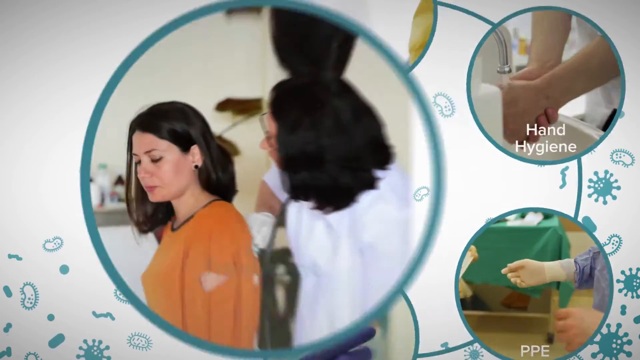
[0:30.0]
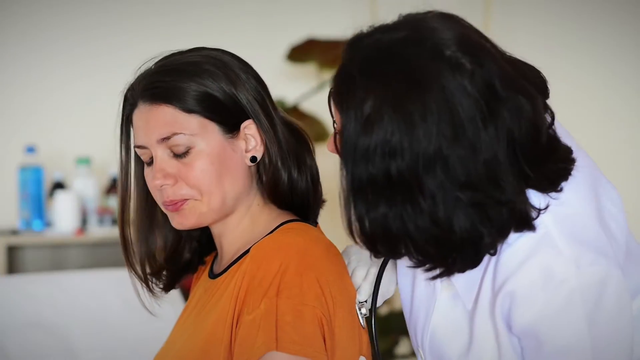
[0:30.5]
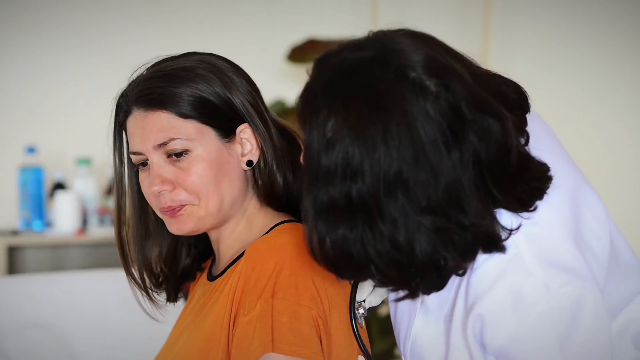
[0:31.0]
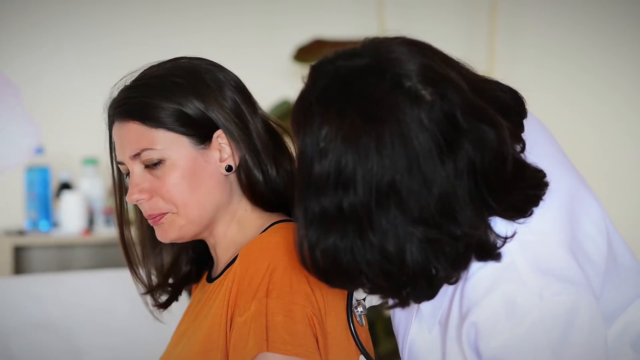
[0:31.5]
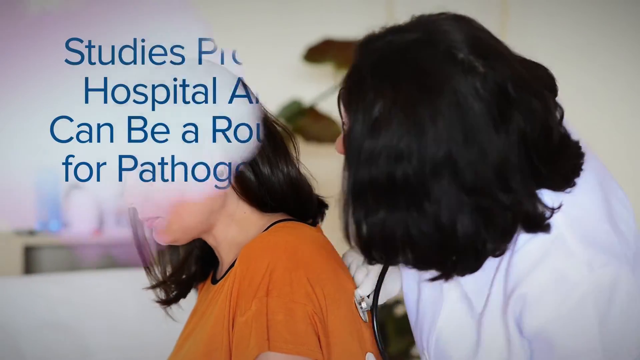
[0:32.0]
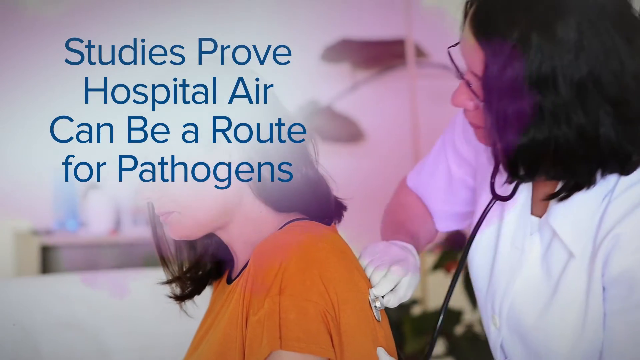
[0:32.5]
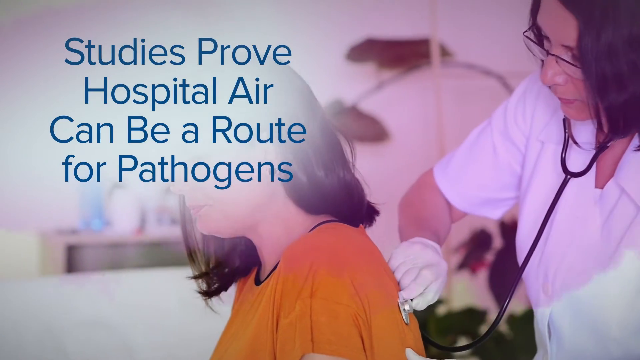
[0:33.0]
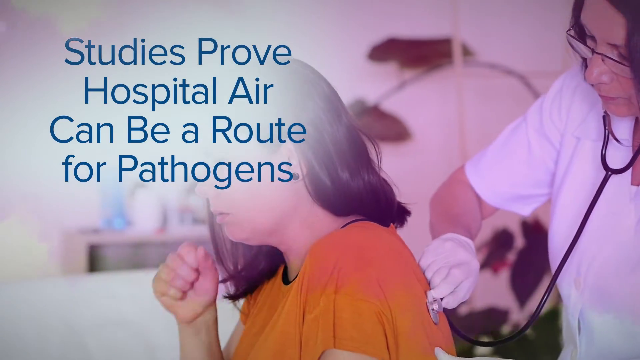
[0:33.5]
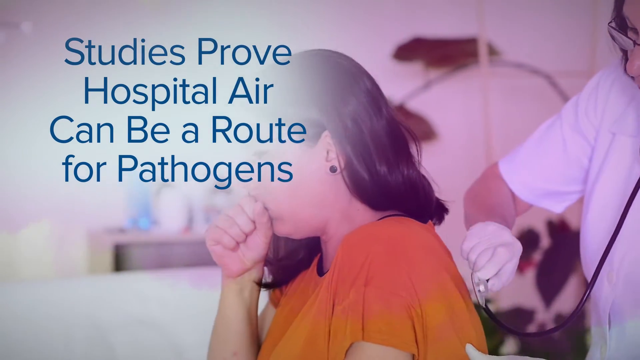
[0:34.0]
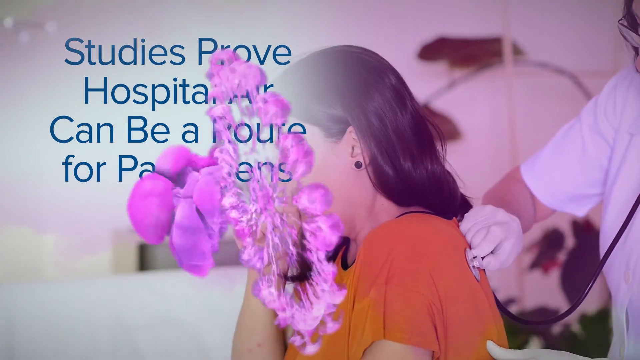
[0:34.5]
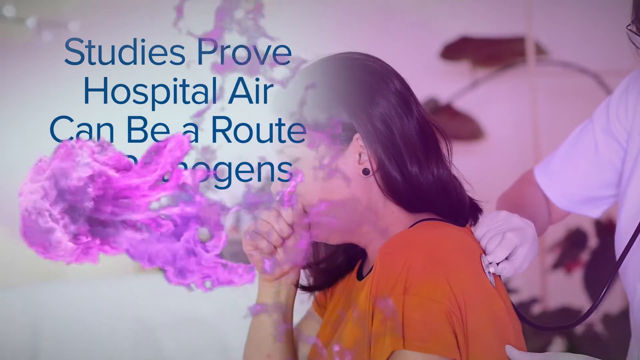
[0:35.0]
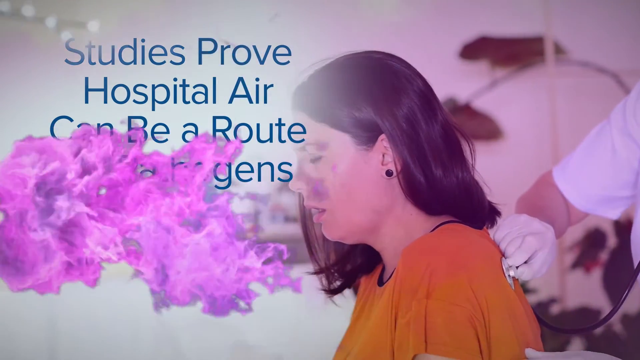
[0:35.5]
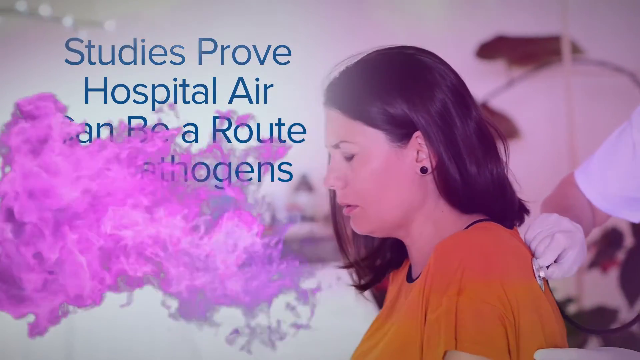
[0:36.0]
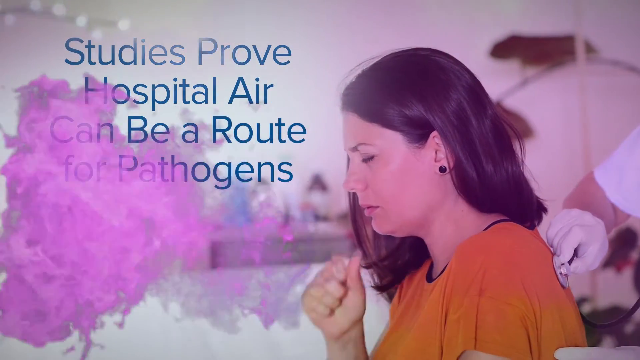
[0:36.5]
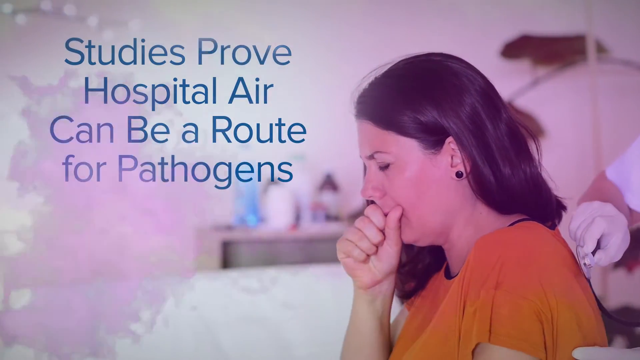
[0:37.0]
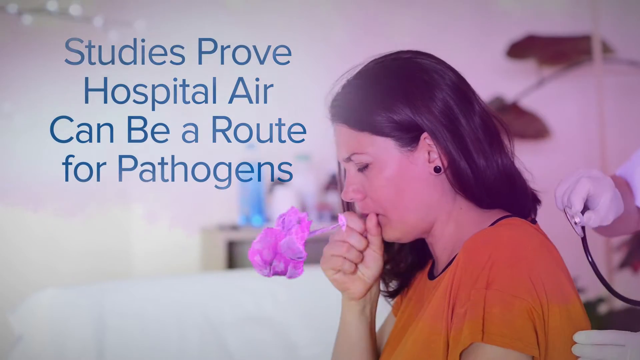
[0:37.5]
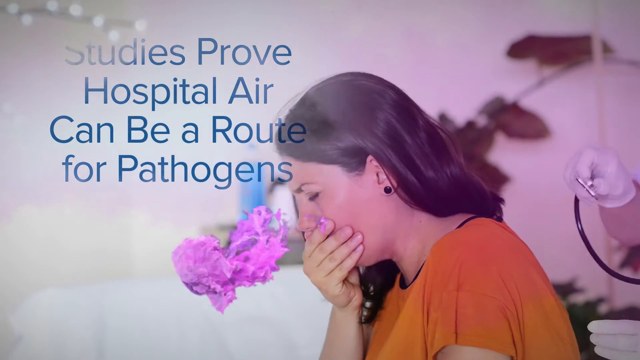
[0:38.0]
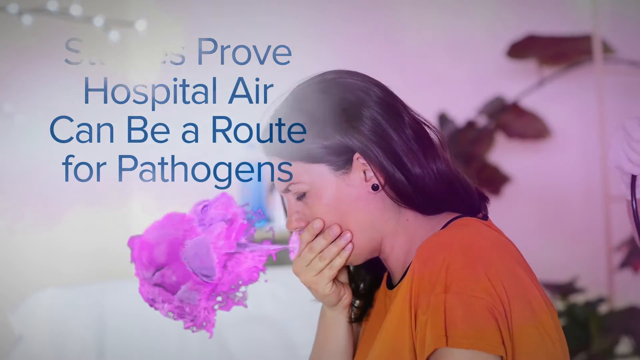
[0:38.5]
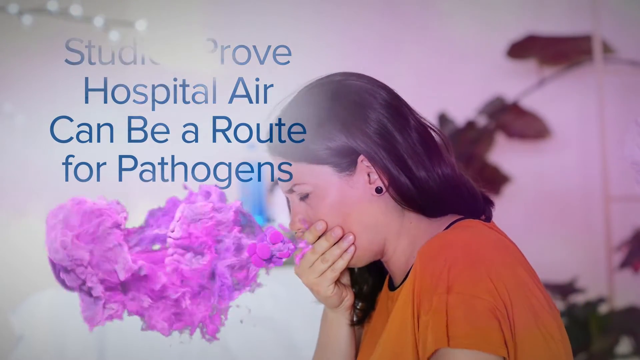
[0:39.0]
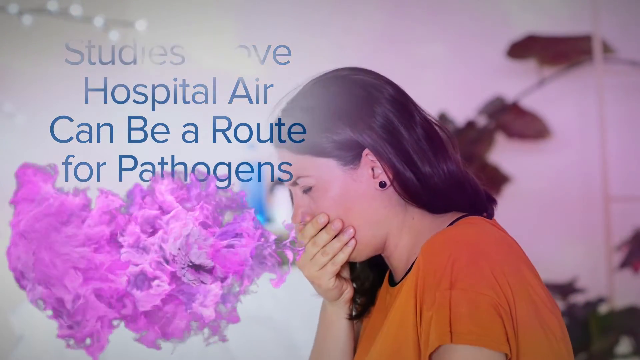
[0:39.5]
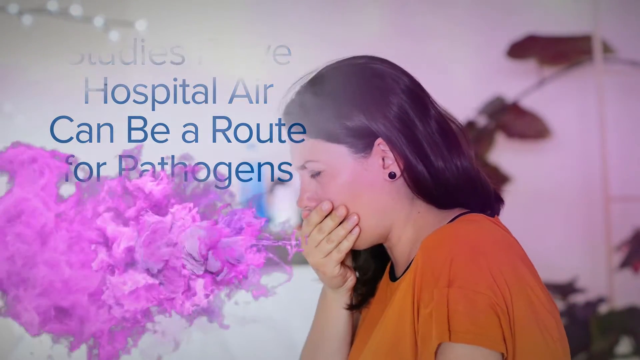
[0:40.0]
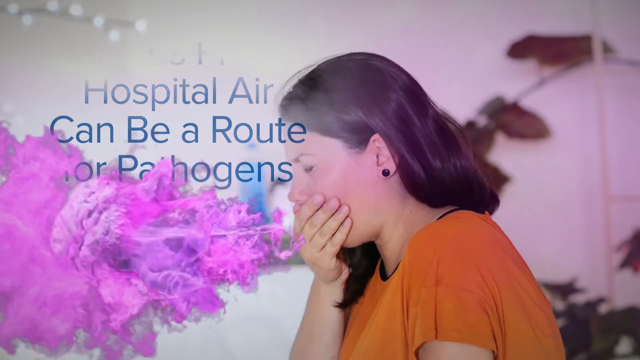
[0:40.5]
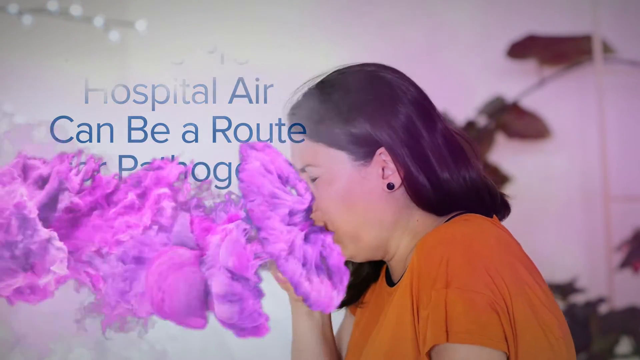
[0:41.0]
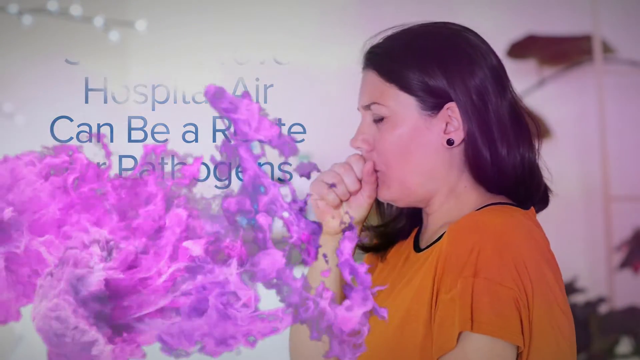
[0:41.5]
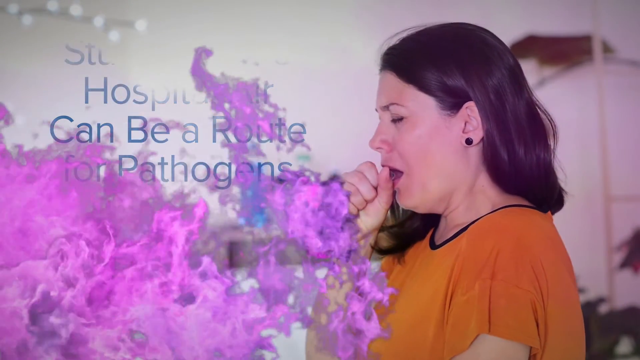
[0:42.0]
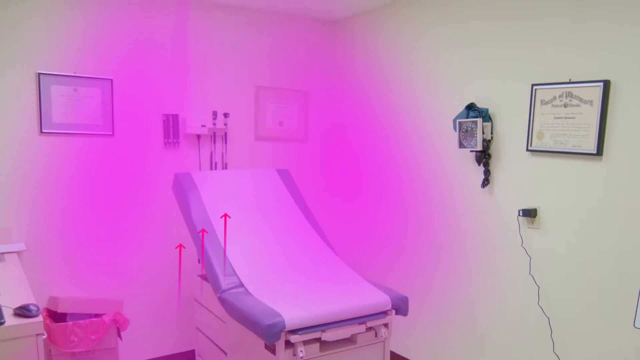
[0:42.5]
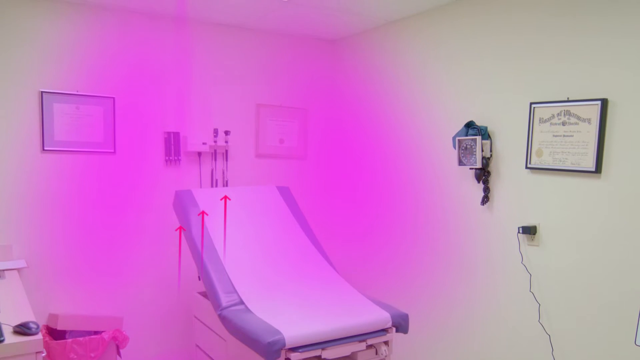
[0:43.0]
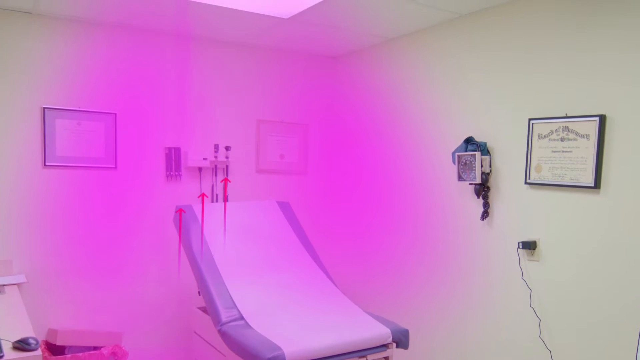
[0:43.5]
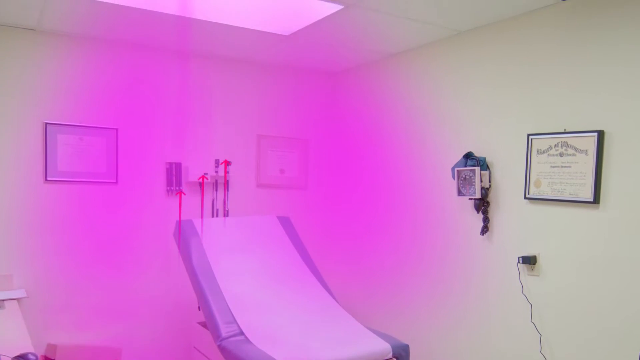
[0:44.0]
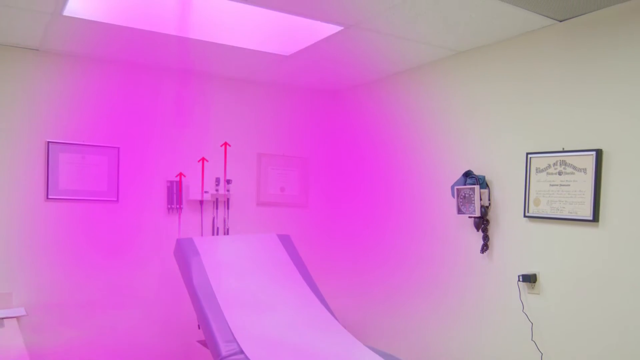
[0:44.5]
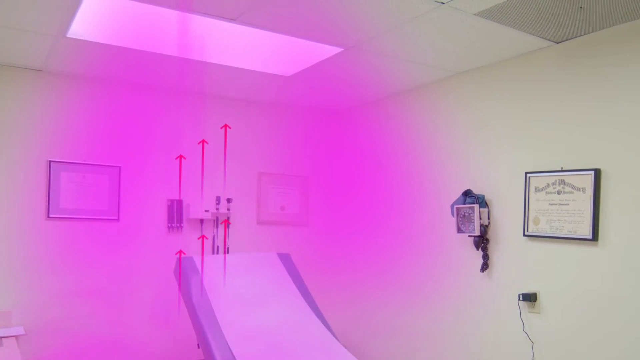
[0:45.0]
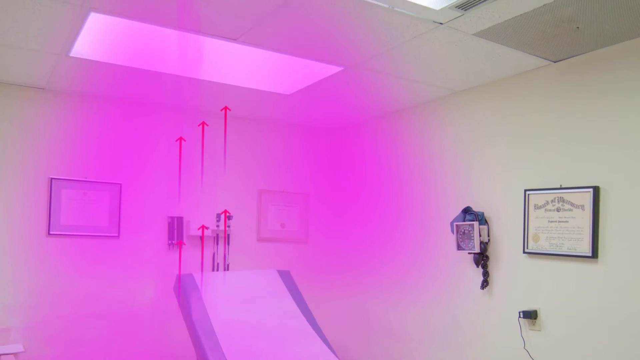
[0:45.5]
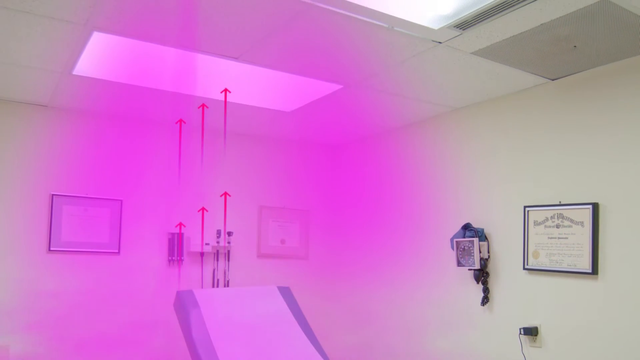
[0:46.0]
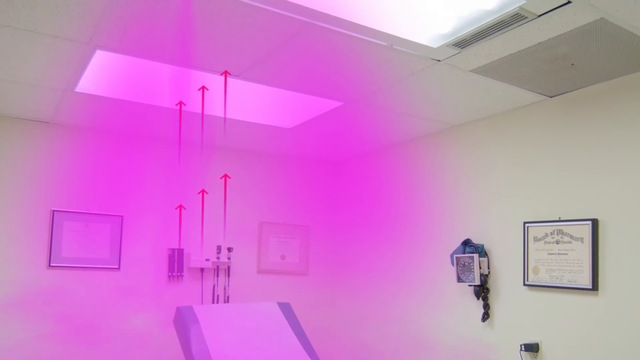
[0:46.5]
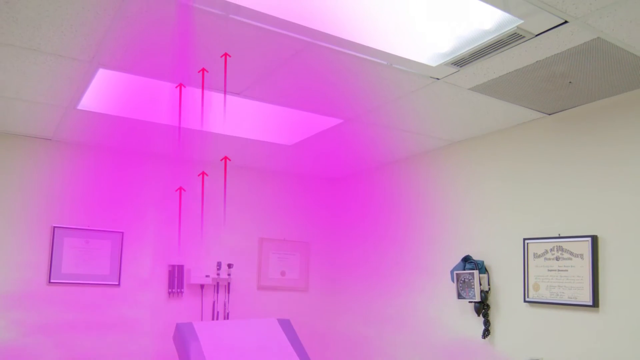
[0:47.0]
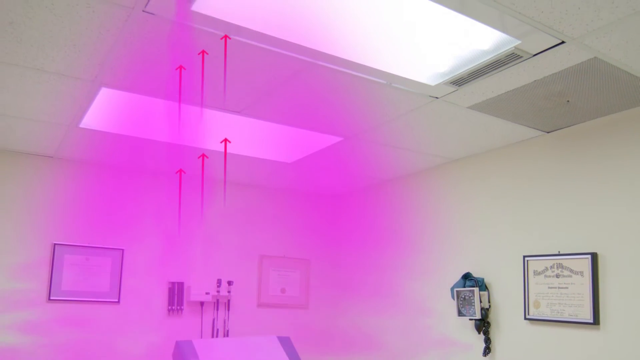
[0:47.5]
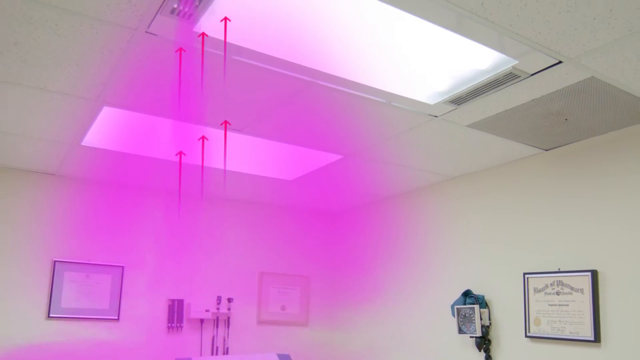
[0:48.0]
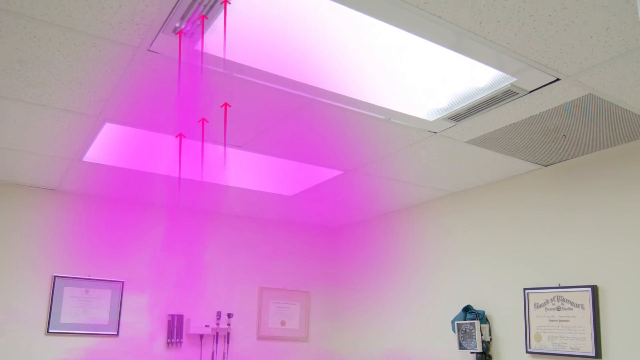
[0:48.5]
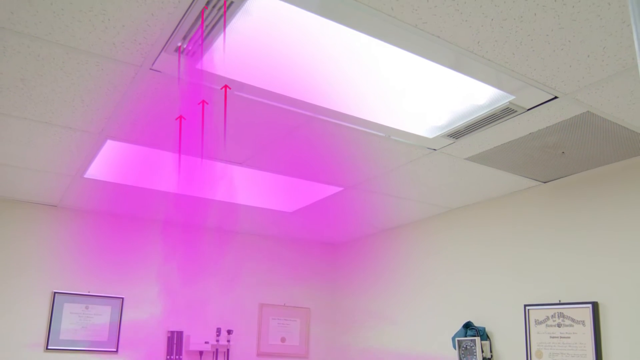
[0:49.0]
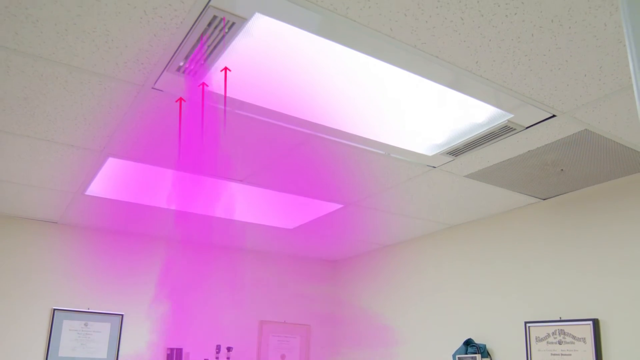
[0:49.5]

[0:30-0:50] The view opens on the air sphere, seen as if through a scope, with a green border around the circle. A patient sits with her eyes kind of closed. She wears an orange shirt, has medium to darker colored hair, and has a small black circular stud piercing. A woman listens to the patient's back with a stethoscope, pressing the little metal piece against her back. To the right are a hand hygiene sphere and another one whose content can't be made out. Then text appears that begins "studies" and ends "can be a route for pathogens." A woman coughs, emitting animated purple smoke that covers some of the text at the bottom. She keeps coughing hard with her fist kind of closed, then covers her mouth with her right hand, but the smoke still seeps through the spaces between her fingers. A hospital patient's room with a bed is shown, with a purple haze representing the woman's cough. The purple smoke rises into the air ducts, showing that it can travel through the ducts to other areas and affect people.